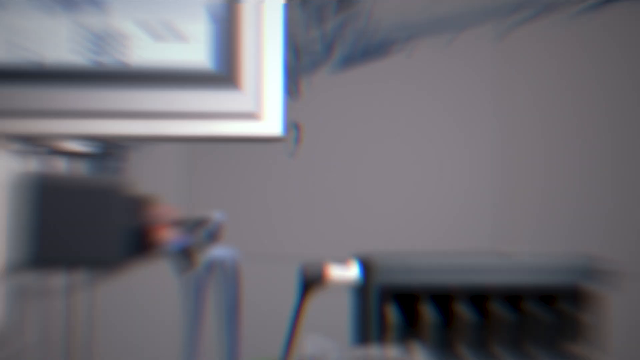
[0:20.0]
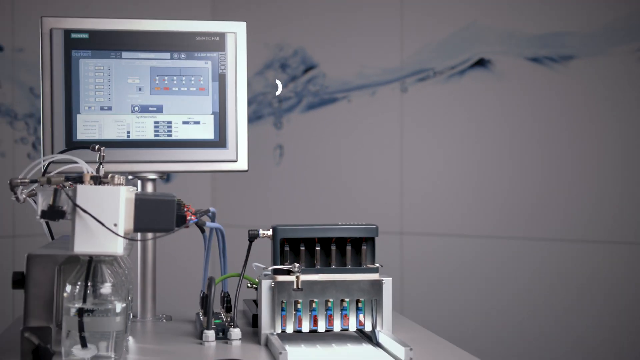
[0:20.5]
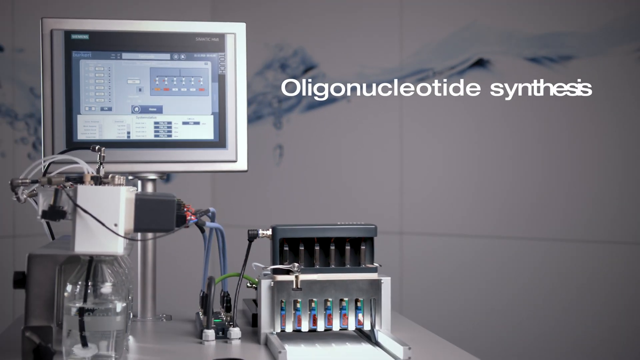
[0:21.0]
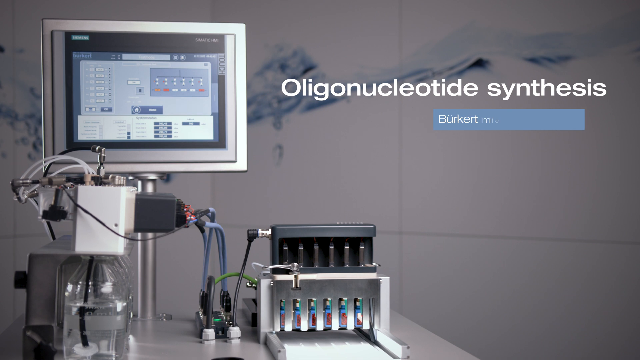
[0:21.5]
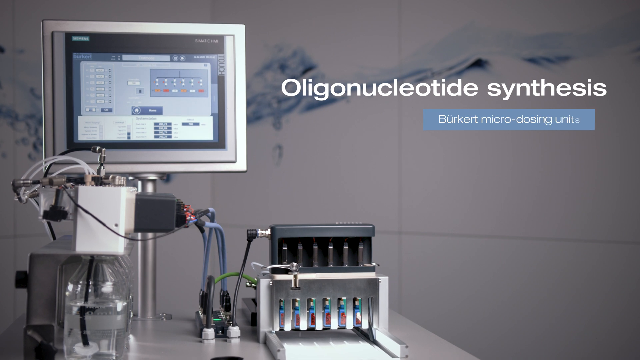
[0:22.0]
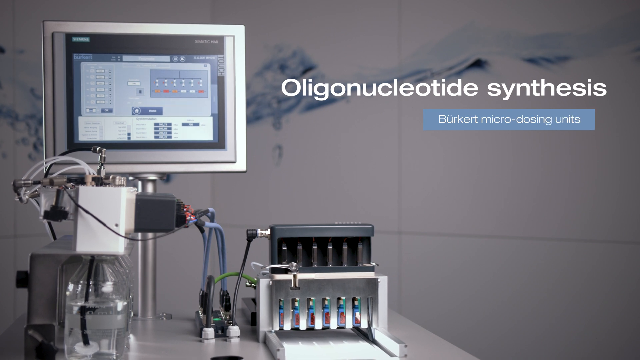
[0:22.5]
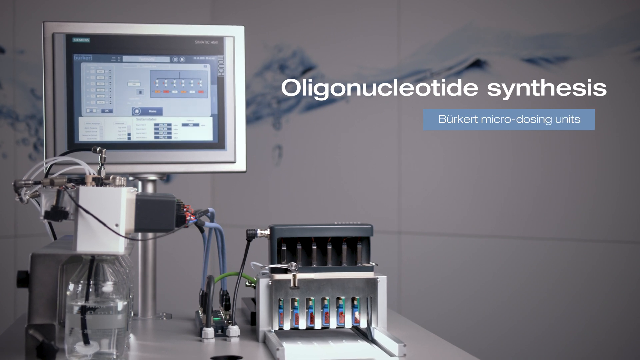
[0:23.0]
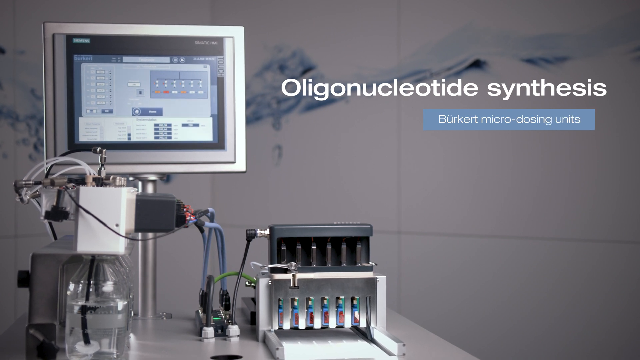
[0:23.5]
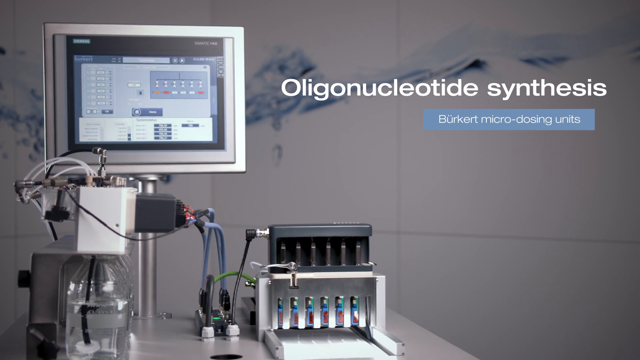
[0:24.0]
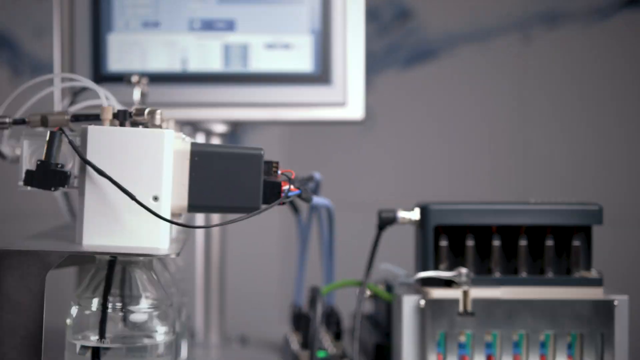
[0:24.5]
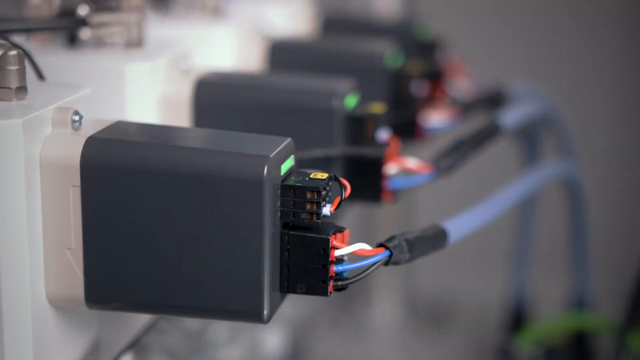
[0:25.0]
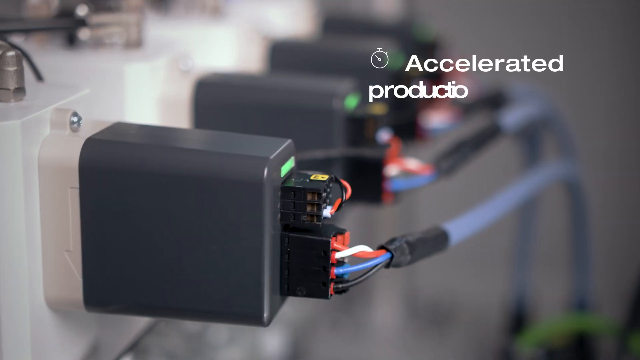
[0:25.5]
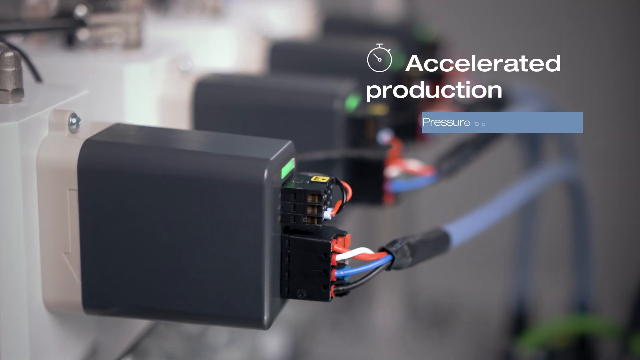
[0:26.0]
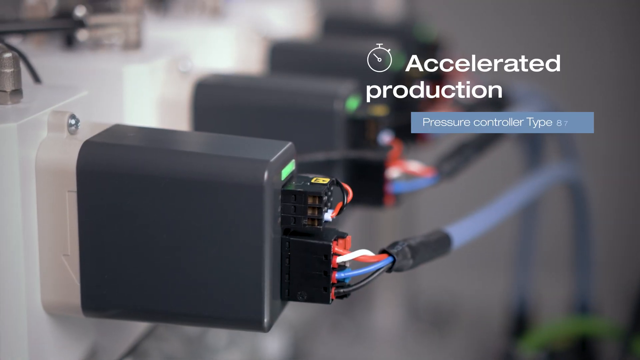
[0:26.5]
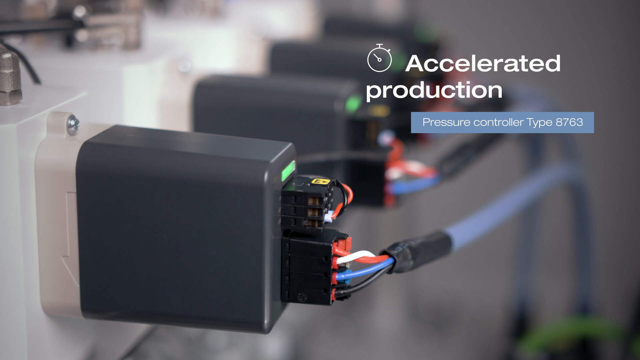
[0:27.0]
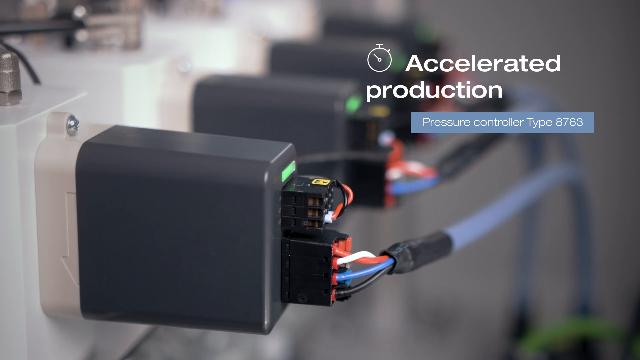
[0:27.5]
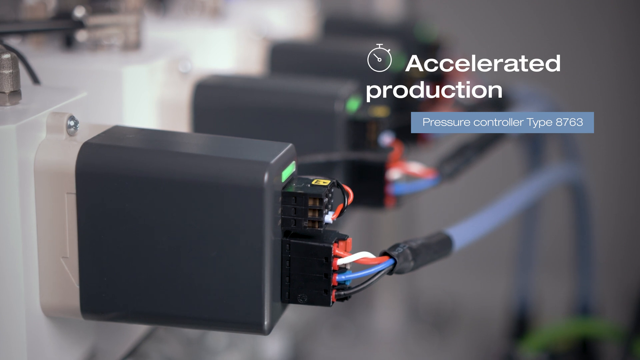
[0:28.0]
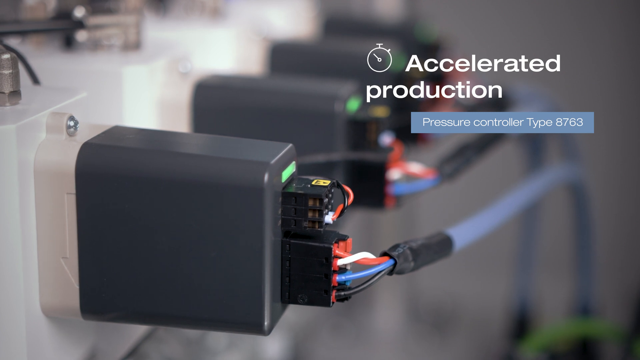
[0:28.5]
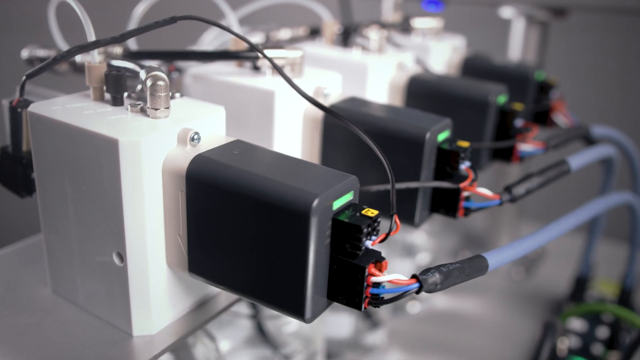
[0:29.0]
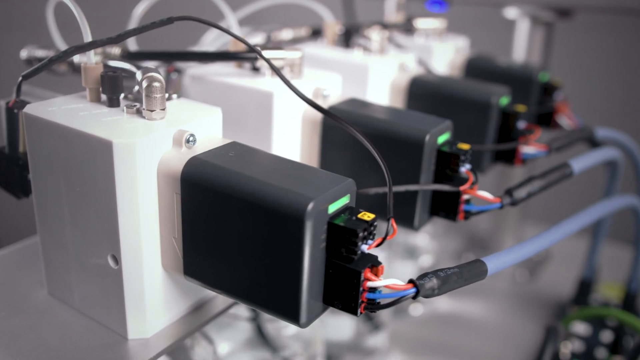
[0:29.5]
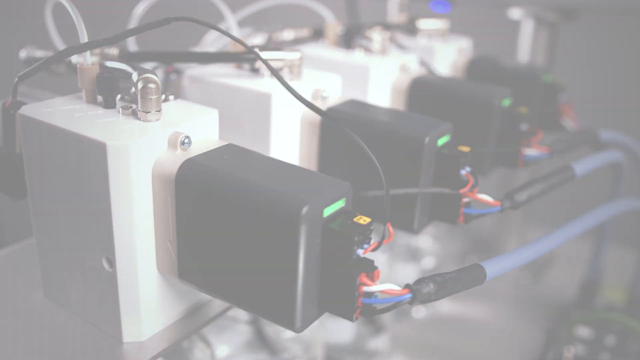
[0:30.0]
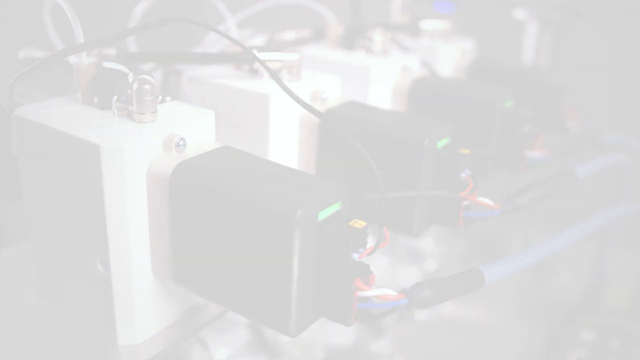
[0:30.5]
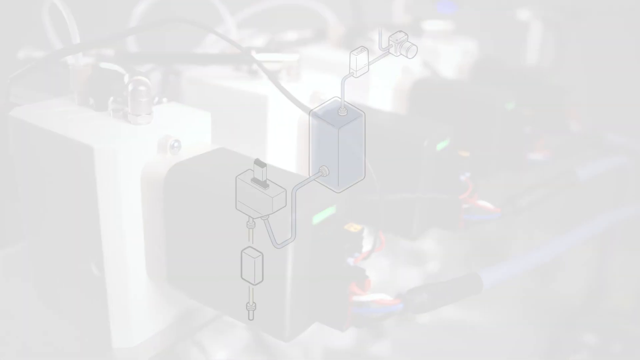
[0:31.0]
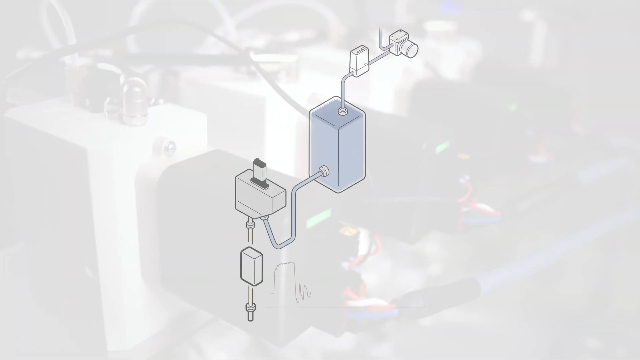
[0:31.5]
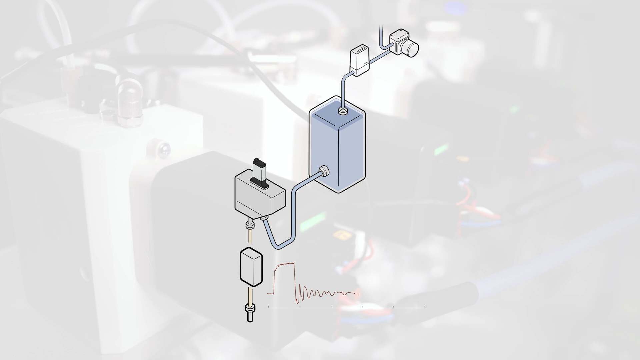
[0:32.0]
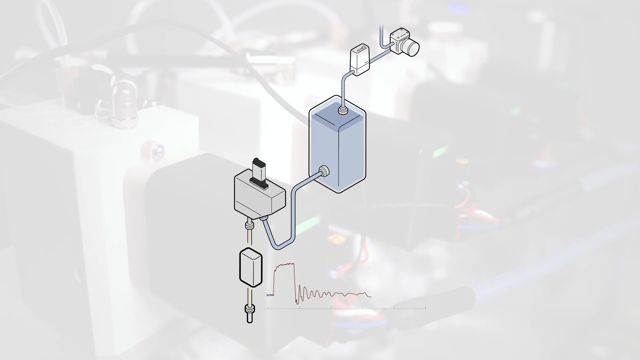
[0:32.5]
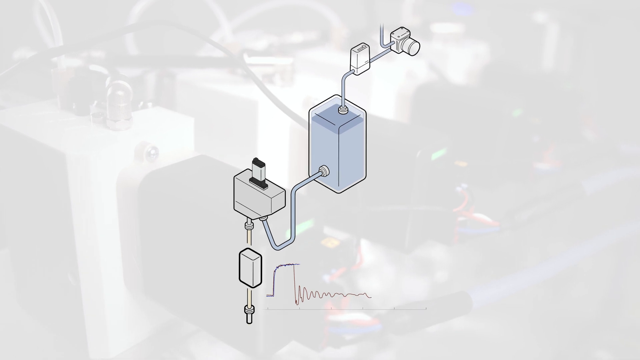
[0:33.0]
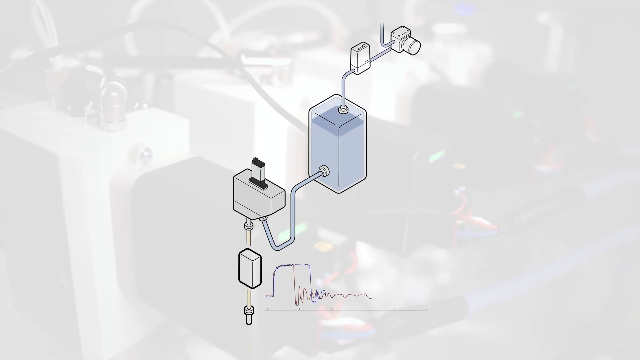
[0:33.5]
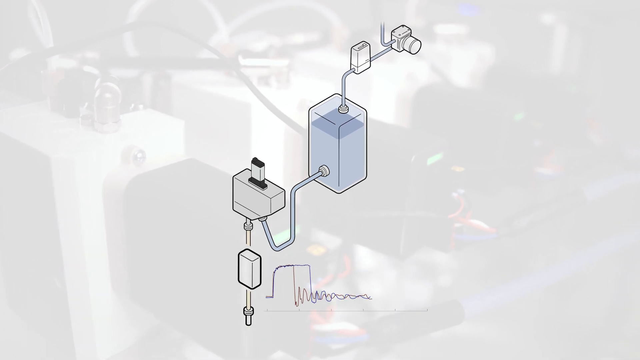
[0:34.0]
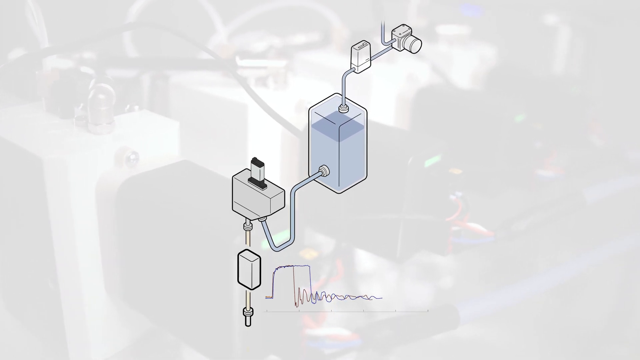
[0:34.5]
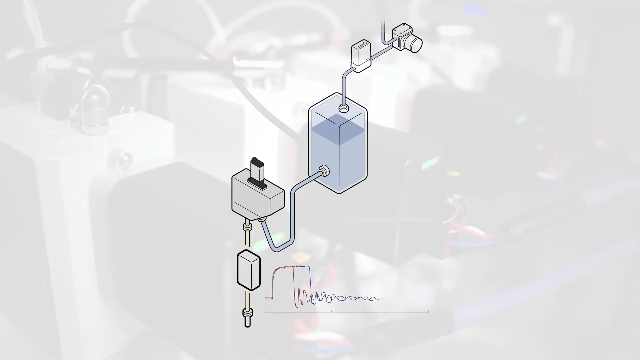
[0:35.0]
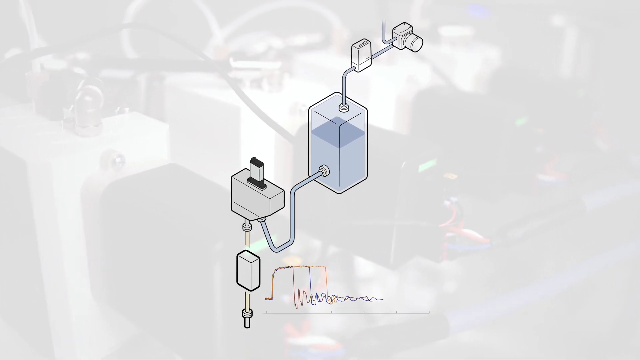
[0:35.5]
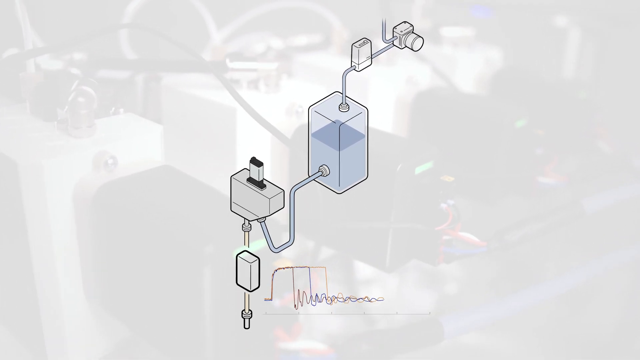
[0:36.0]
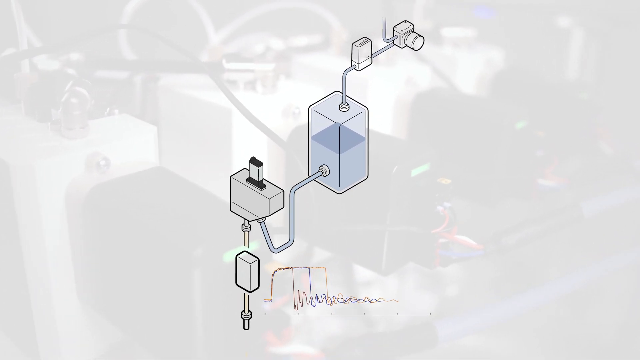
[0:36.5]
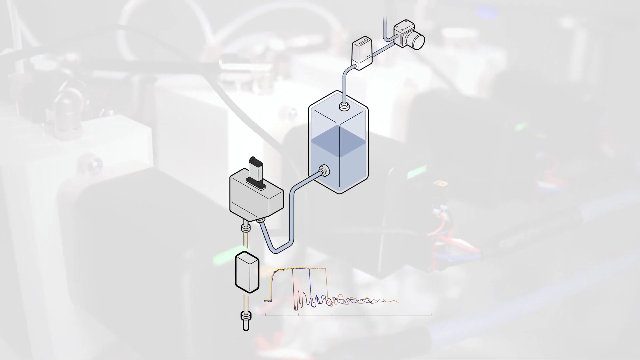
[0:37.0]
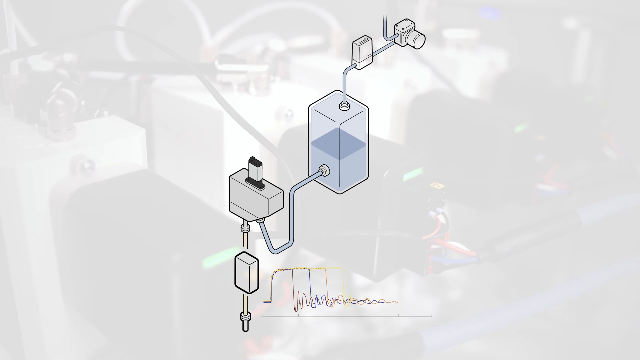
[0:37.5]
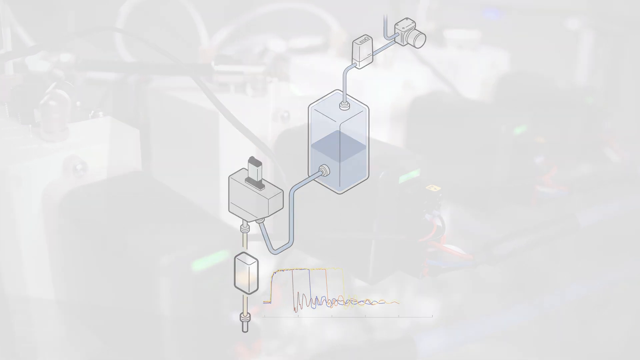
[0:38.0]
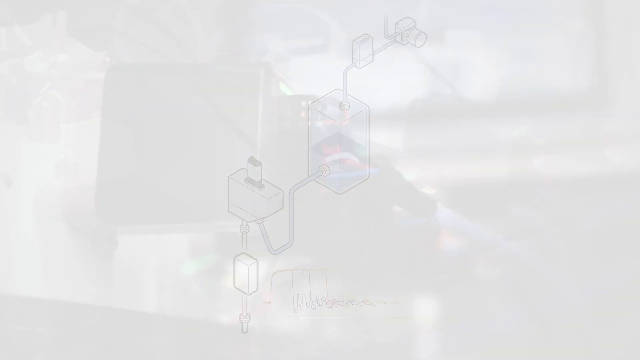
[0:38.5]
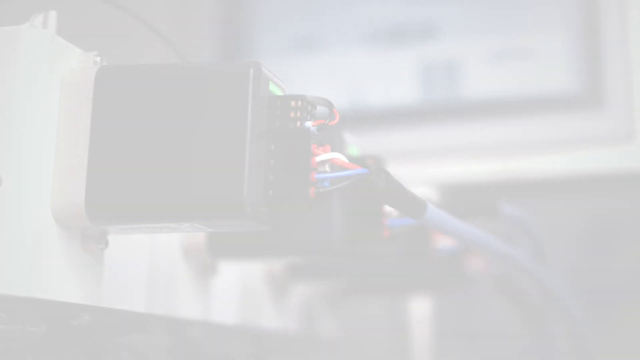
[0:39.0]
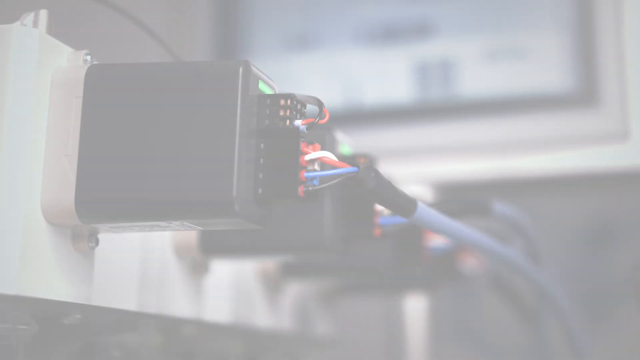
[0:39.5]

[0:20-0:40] A computerized device is in the background, and the text reads "oligonucleotide synthesis," with "Burkert micro dosing units" underneath in smaller print. The words "oligonucleotide synthesis" are in a white font, and "Burkert micro dosing units" is in white print inside a grayish blue rectangle. Text about accelerated production and "pressure controller type" appears. The machine has many little tubes connected to rectangular prism boxes. Liquid moves through a central area that is kind of like a little holding tank, then on to the machine, which makes little droplets on the testing area.